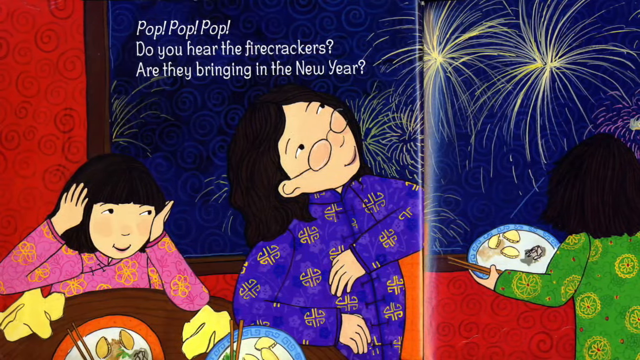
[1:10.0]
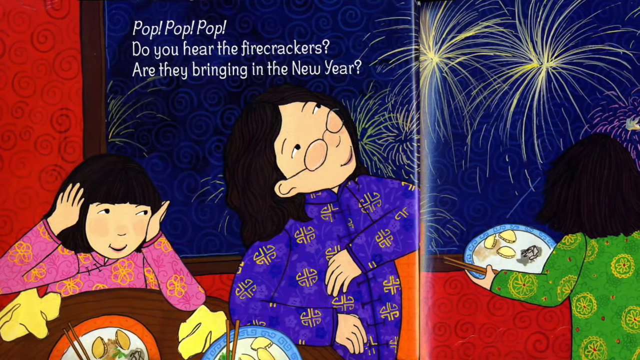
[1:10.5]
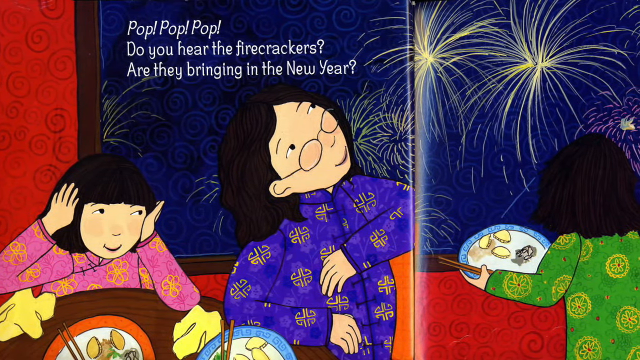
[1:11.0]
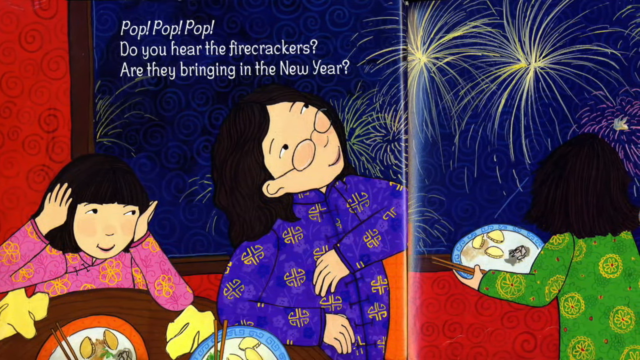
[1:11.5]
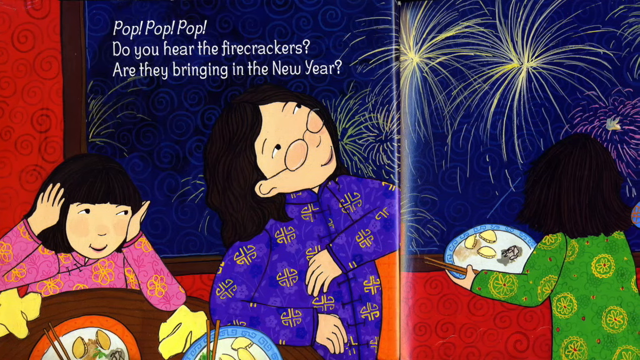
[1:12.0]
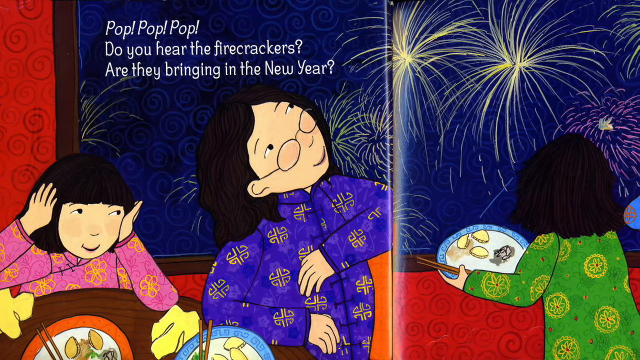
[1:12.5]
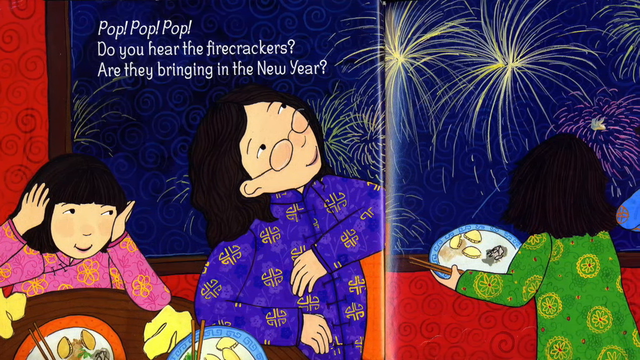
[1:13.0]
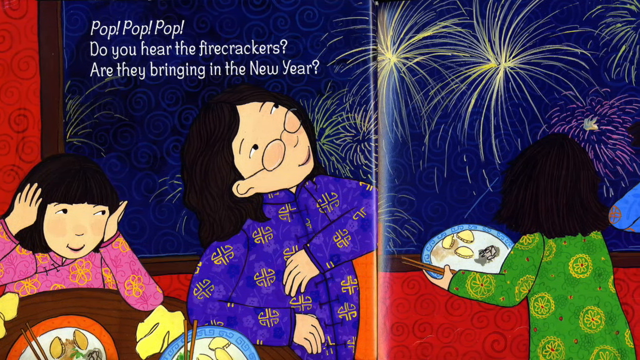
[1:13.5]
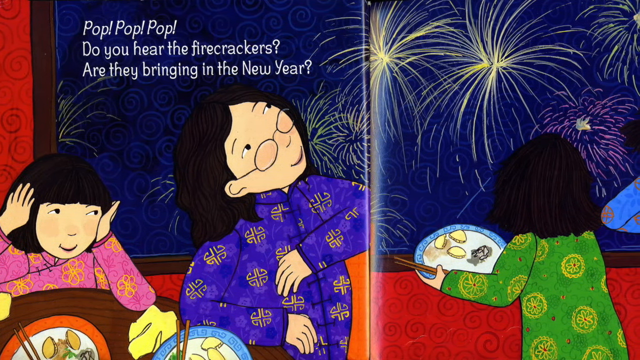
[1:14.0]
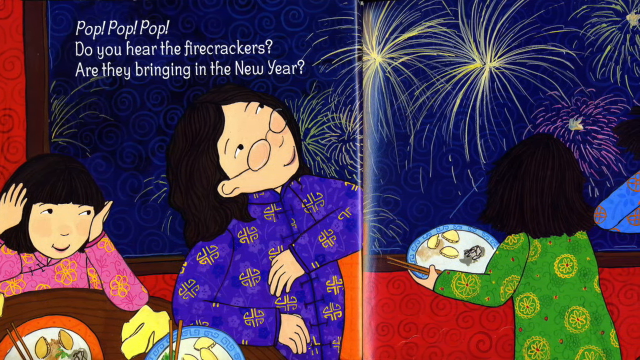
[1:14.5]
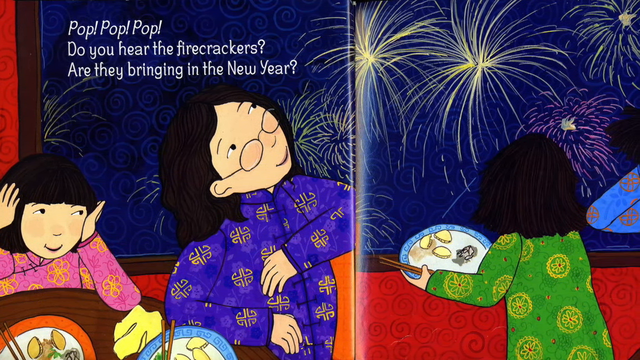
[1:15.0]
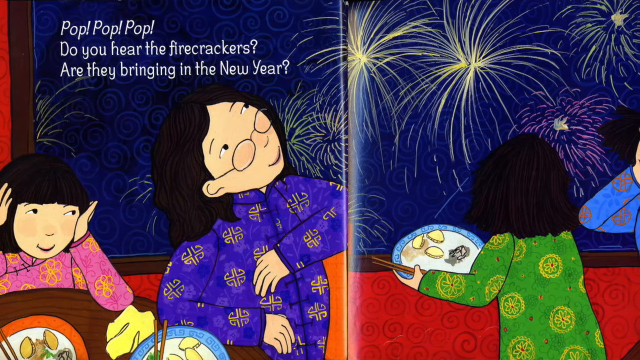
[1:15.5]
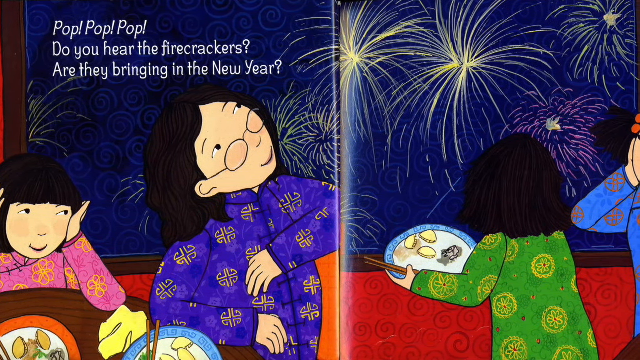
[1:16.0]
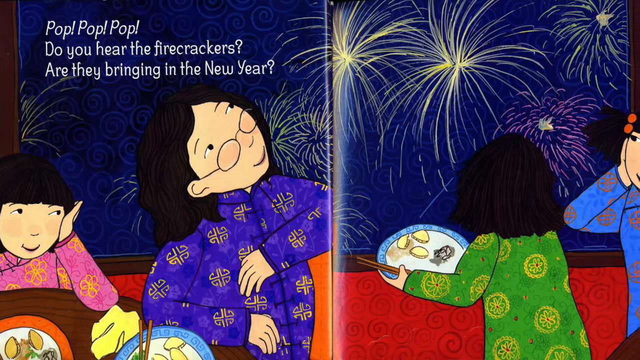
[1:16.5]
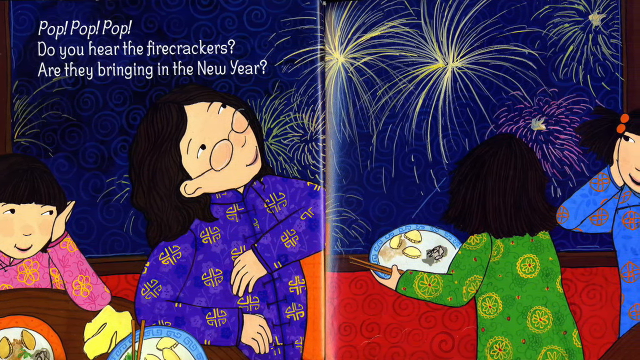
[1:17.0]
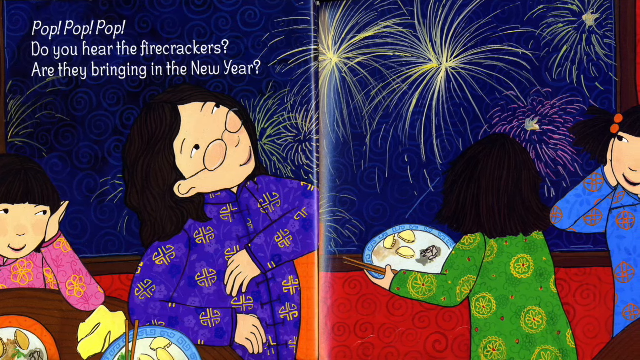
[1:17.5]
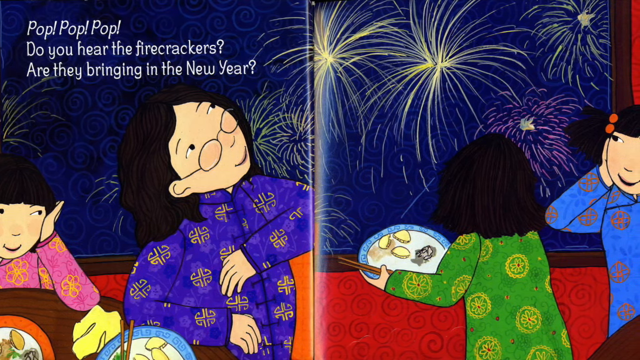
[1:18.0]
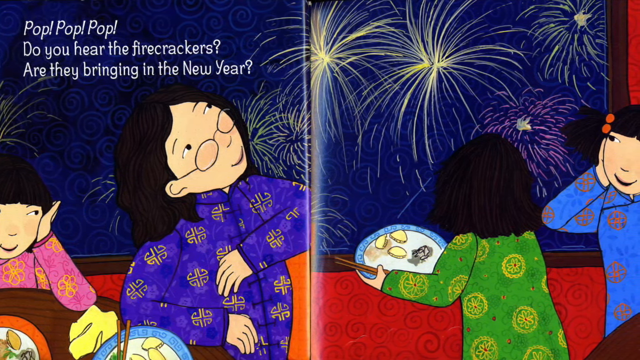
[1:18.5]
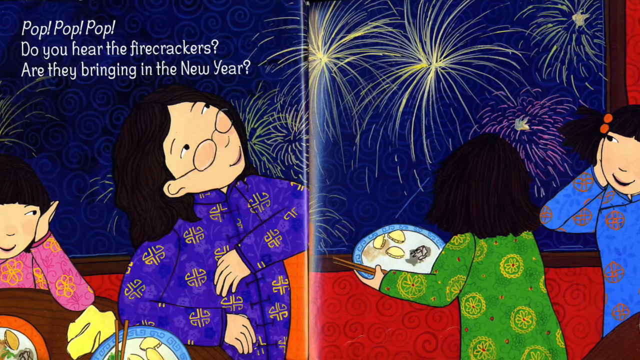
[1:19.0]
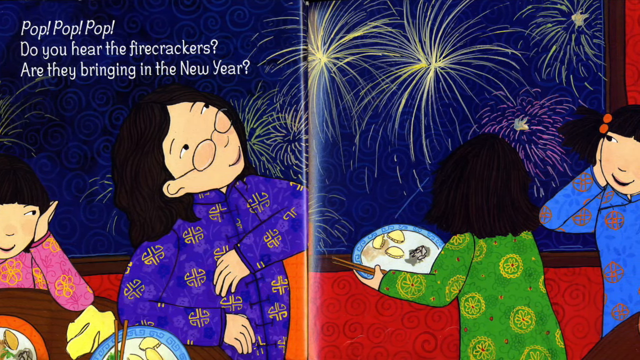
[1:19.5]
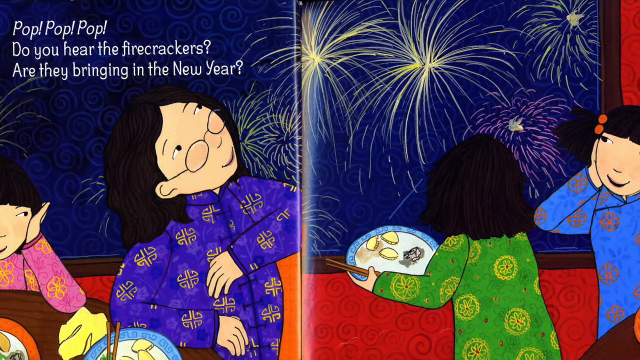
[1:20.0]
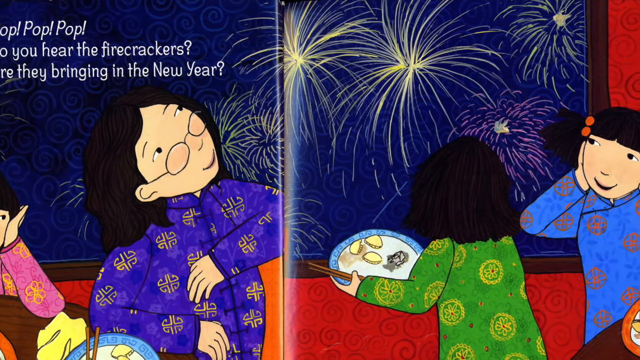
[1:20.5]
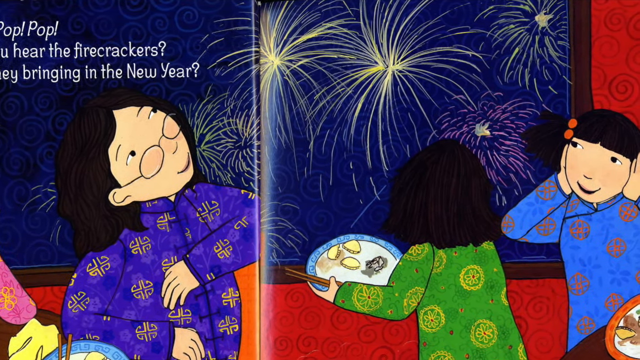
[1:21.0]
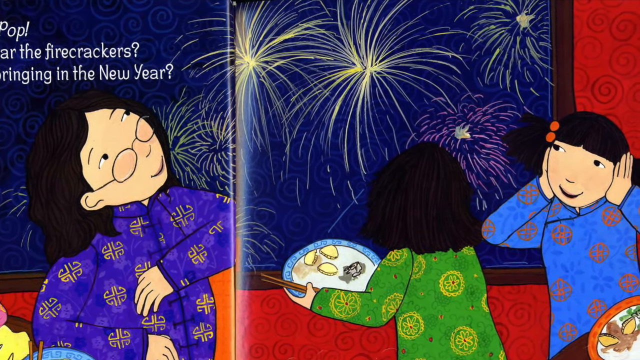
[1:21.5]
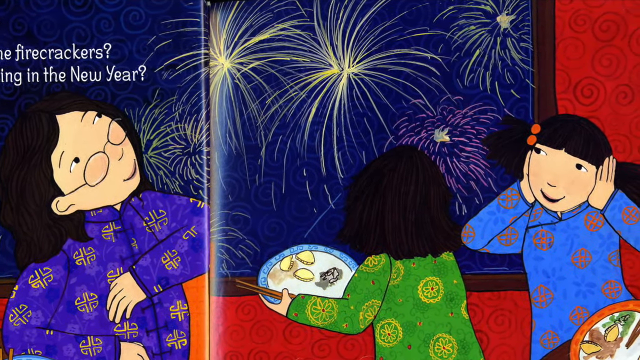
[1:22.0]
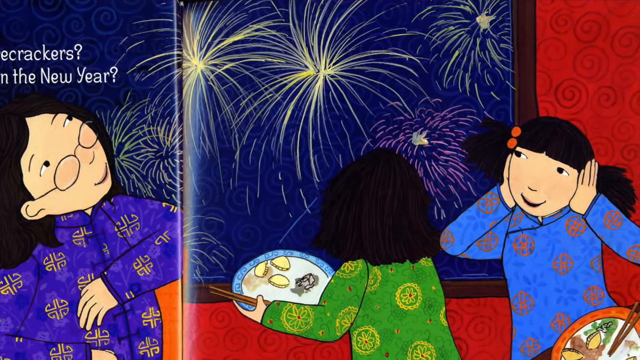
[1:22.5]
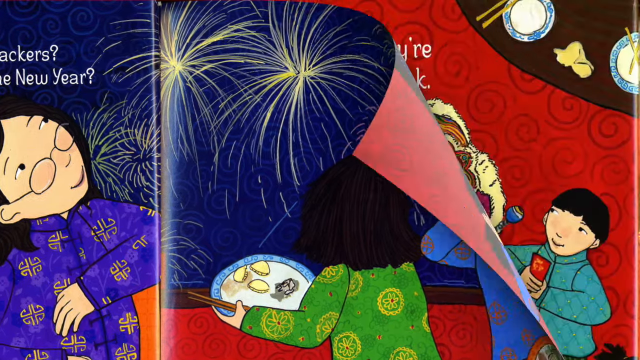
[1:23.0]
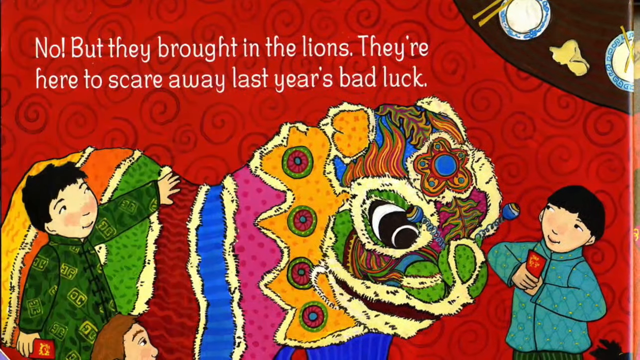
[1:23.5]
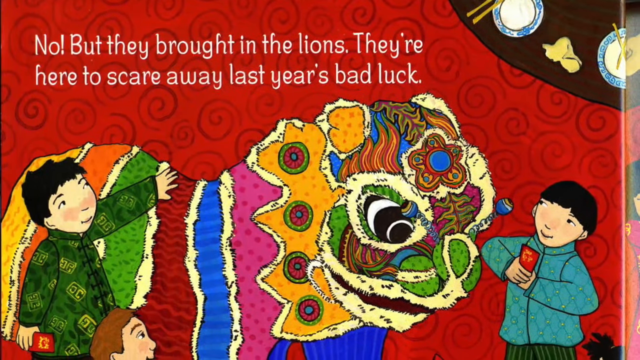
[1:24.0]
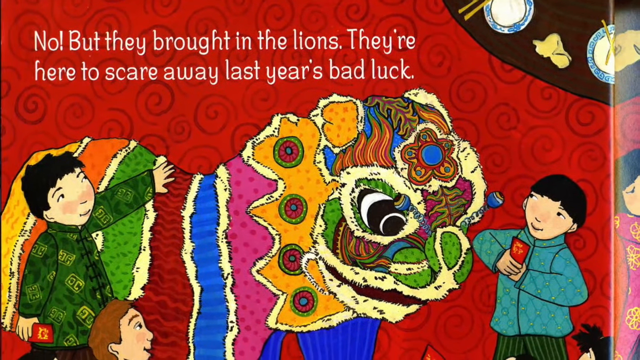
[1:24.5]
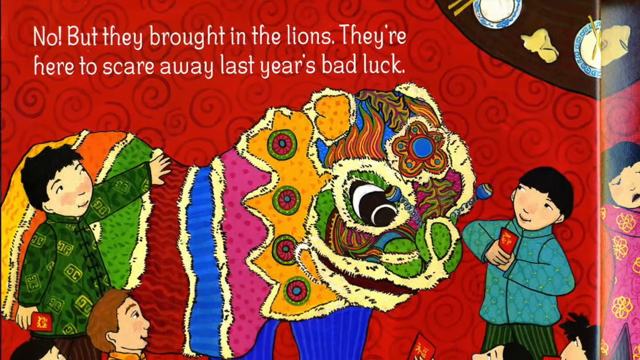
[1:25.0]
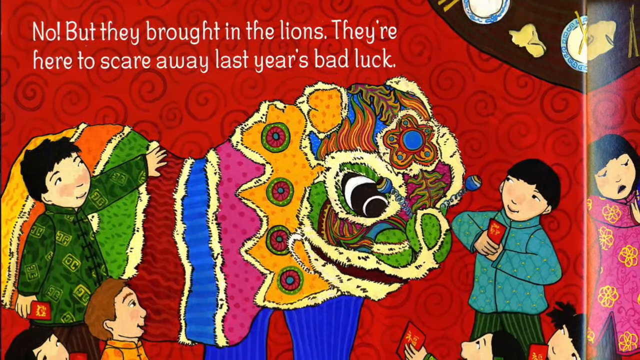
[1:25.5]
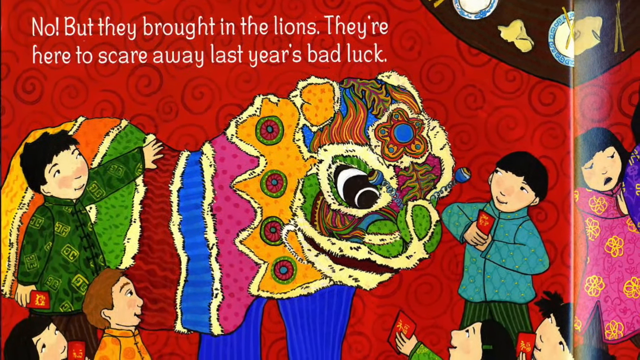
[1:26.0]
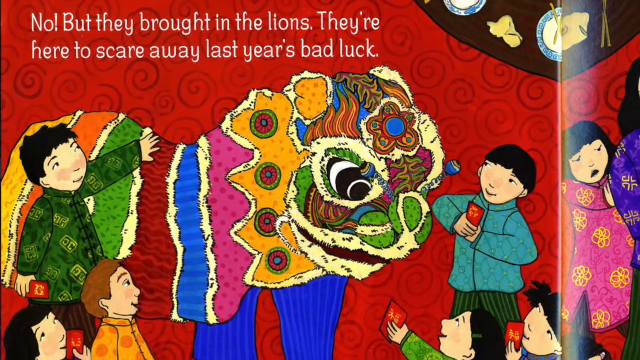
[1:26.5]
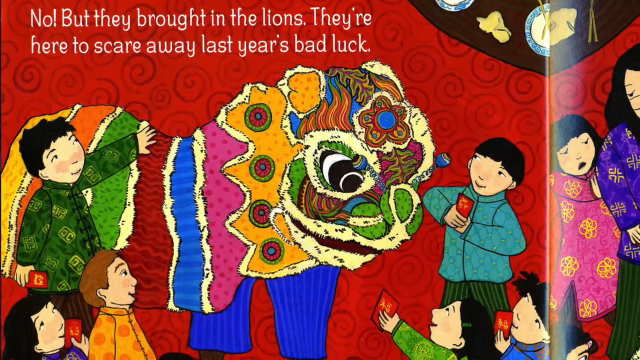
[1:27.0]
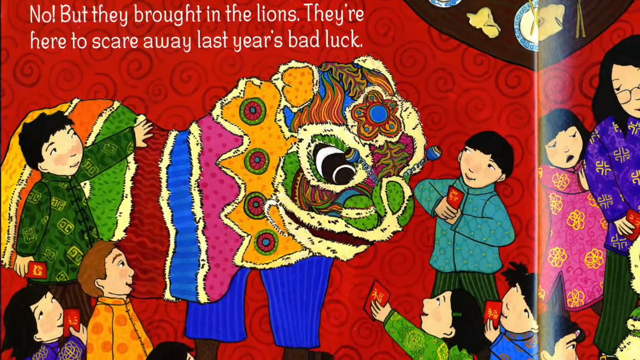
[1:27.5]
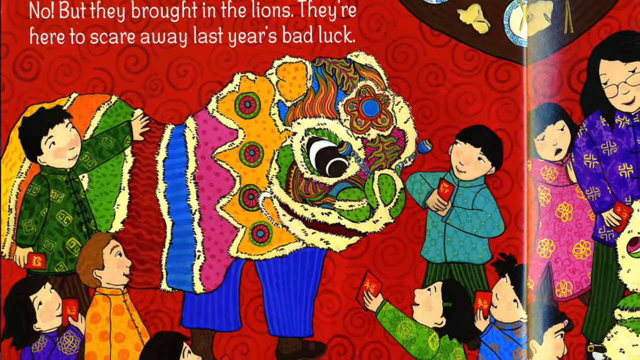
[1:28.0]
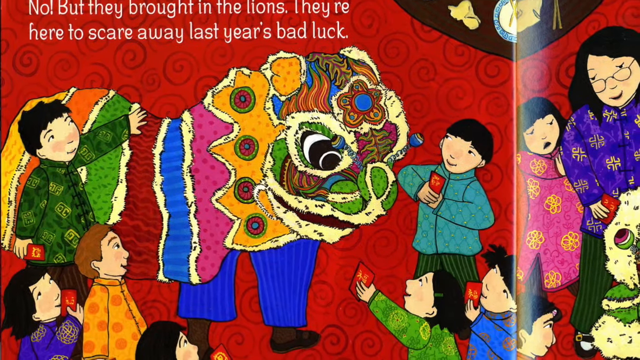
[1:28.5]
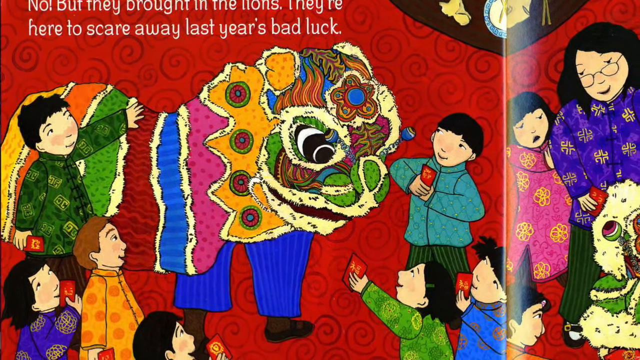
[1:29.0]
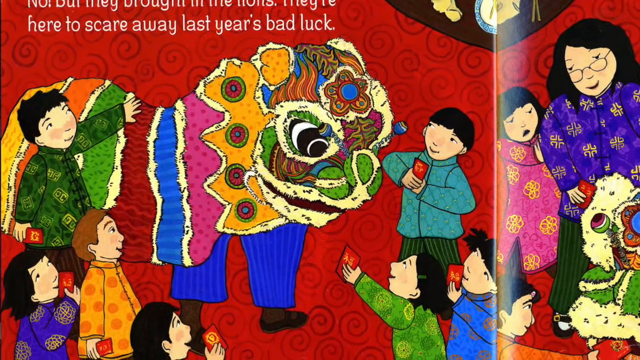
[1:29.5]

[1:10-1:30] The family stands inside the house, looking out of a window. On the left side a table is in front of a couple of the family members, and above them the text reads "pop, pop, pop. Do you hear the firecrackers? Are they bringing in the new year?" These two people wear what look like dresses or kimonos: the one on the left is pink with flowers, and the one on the right is purple with some sort of embroidery. On the left page there are firecrackers galore, a girl in a green outfit with flowers holding some dumplings, and a girl in a blue outfit holding the sides of her head in surprise or amazement. The page turns to reveal a big Chinese lion with two boys standing around it; one boy has a red envelope and the other pats the lion. In the top right corner is a plate with some dumplings. On the left the text reads "But they brought in the lions. They're here to scare away last year's bad luck." The view zooms out to reveal many more people standing around the lion, a few of them also holding red envelopes.